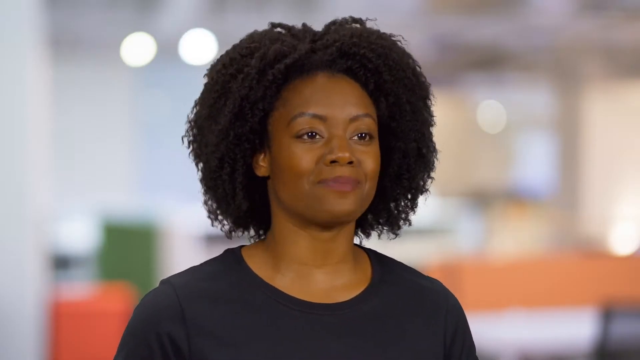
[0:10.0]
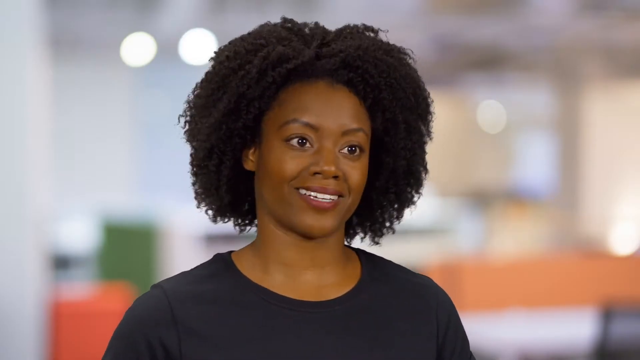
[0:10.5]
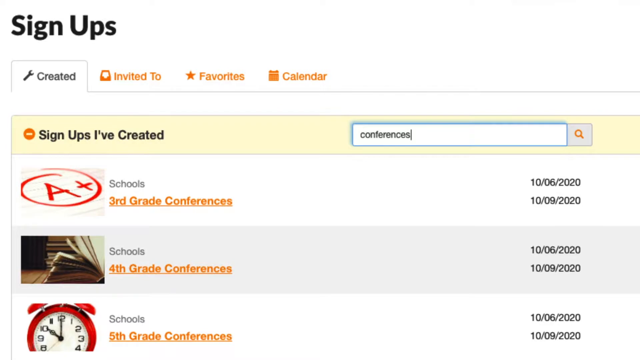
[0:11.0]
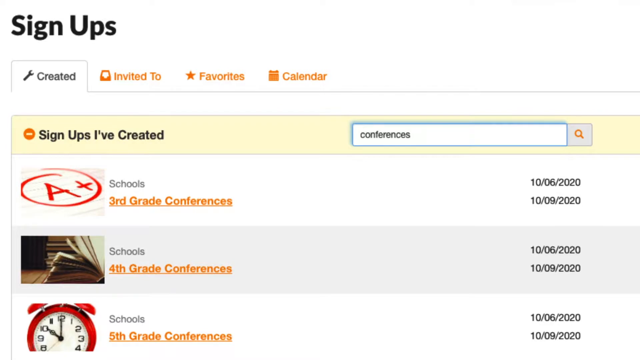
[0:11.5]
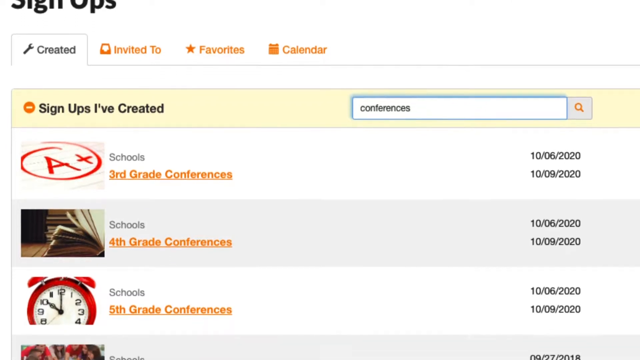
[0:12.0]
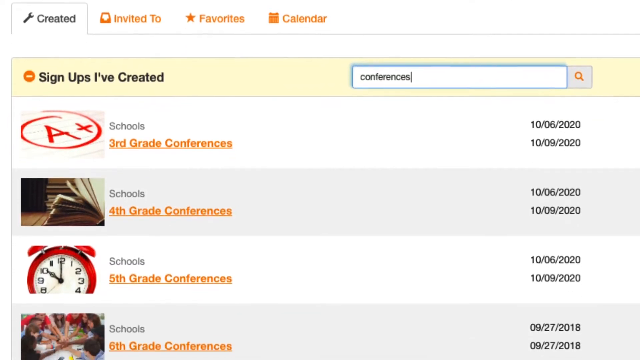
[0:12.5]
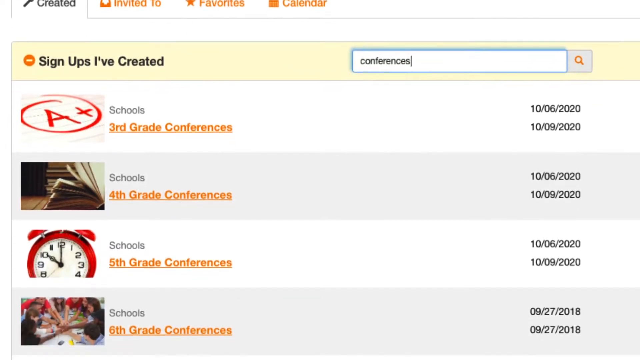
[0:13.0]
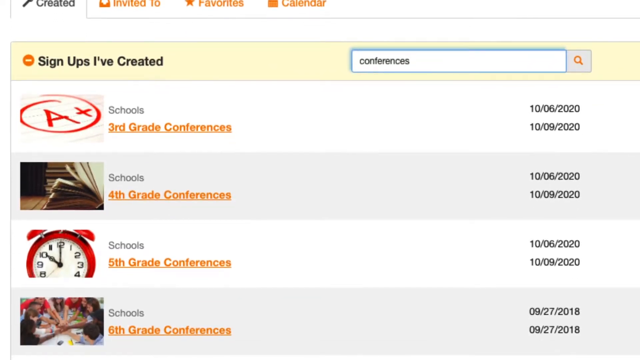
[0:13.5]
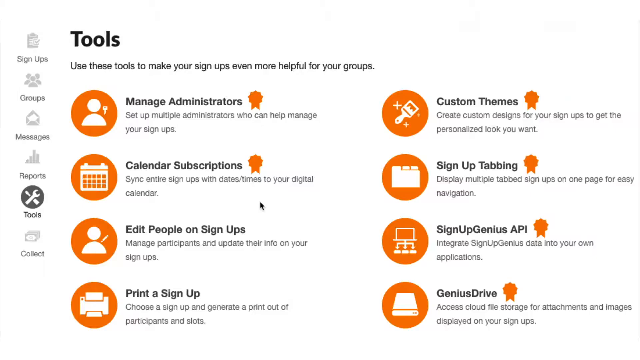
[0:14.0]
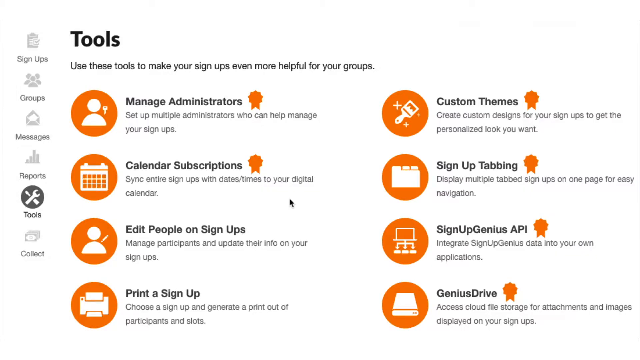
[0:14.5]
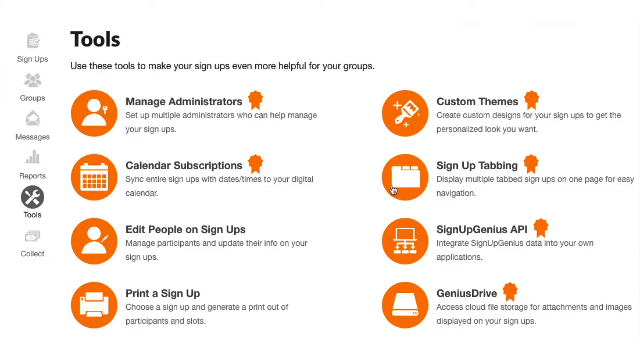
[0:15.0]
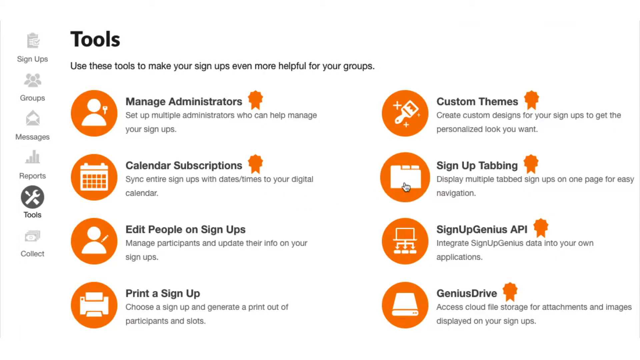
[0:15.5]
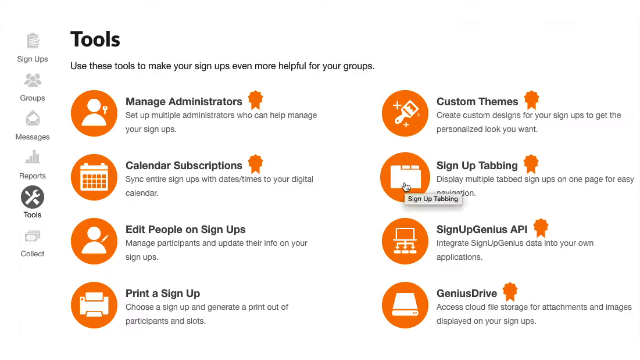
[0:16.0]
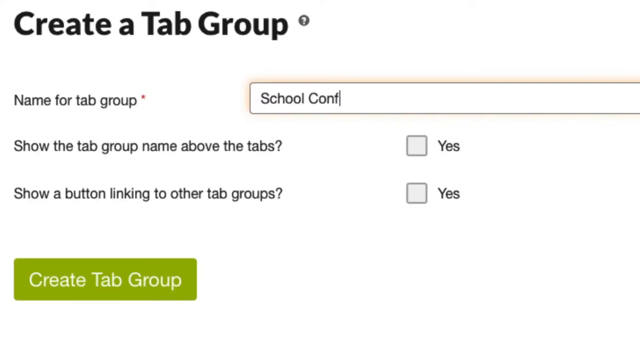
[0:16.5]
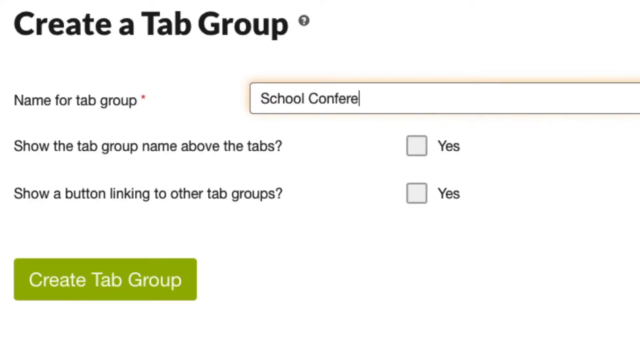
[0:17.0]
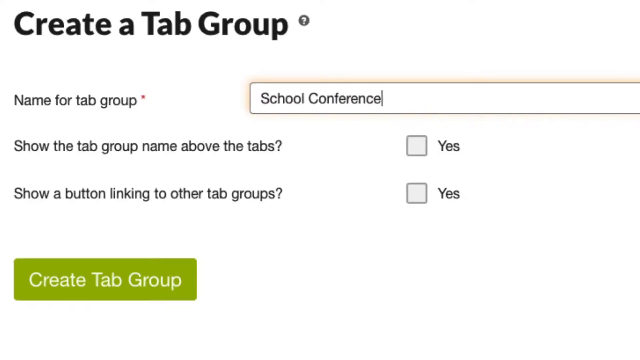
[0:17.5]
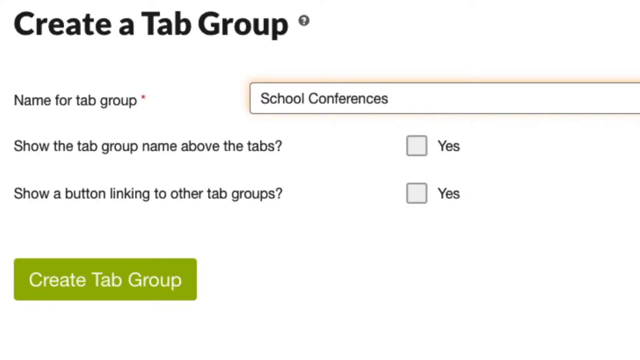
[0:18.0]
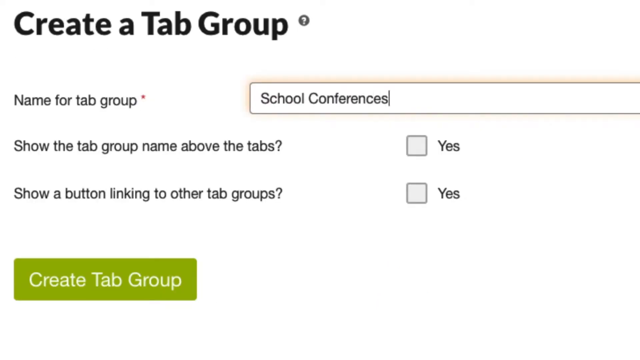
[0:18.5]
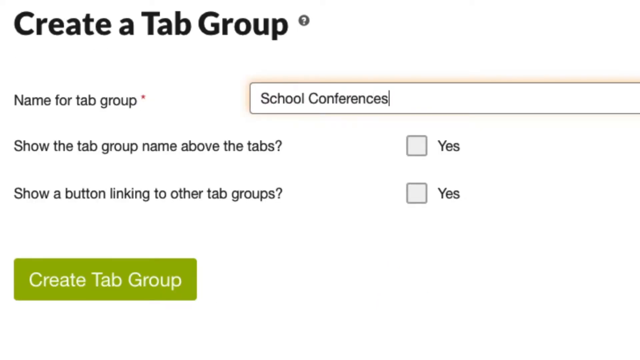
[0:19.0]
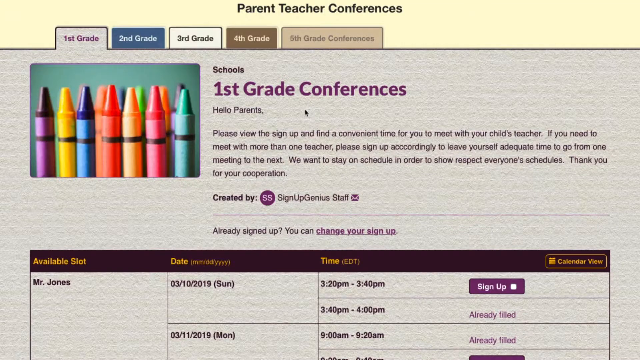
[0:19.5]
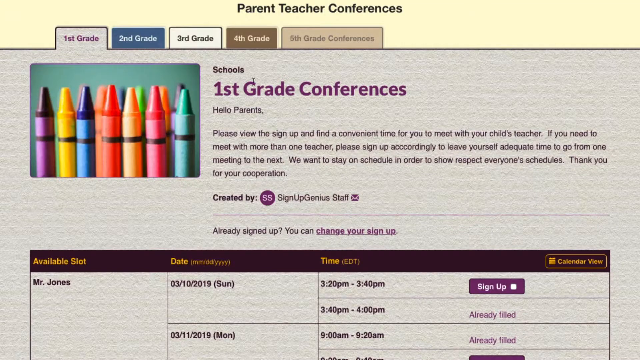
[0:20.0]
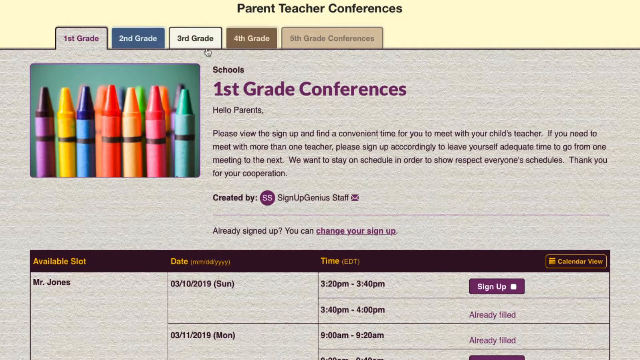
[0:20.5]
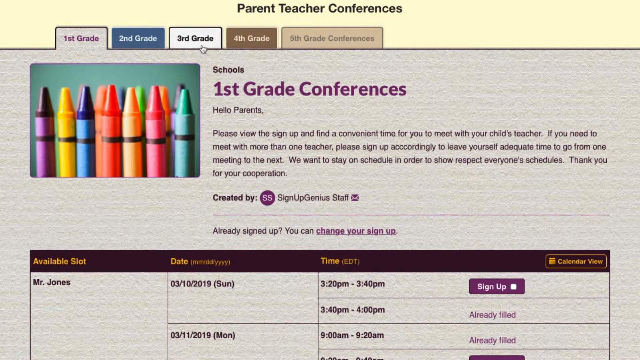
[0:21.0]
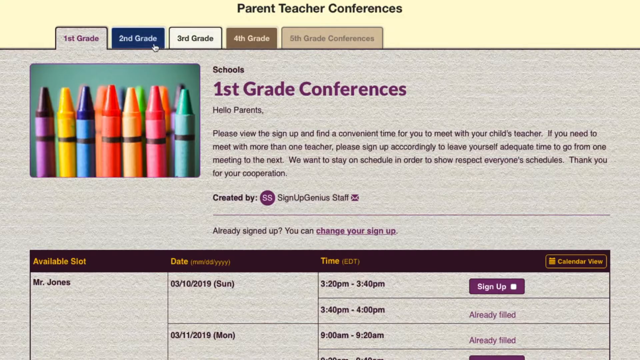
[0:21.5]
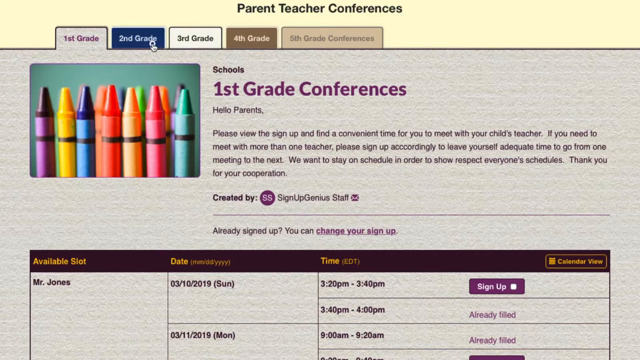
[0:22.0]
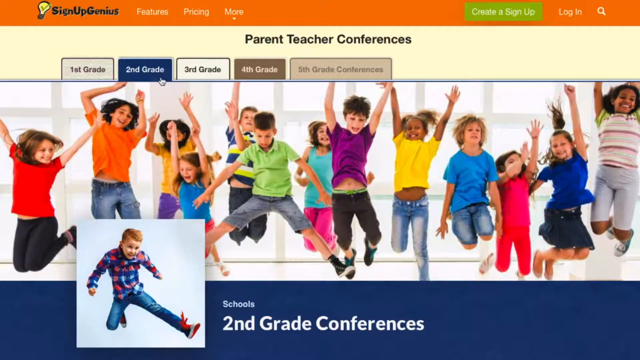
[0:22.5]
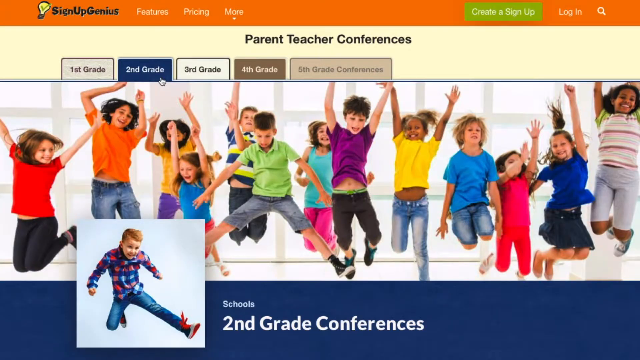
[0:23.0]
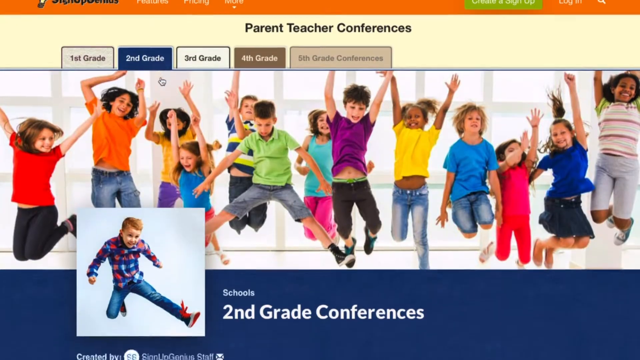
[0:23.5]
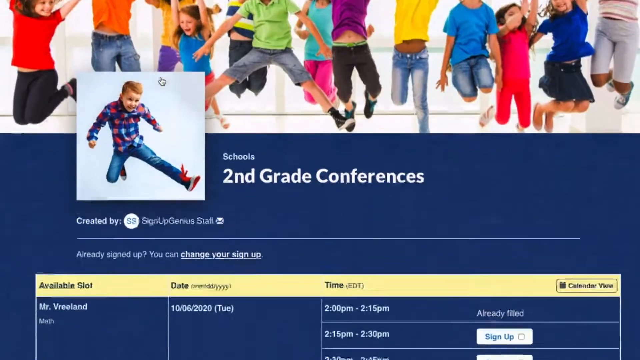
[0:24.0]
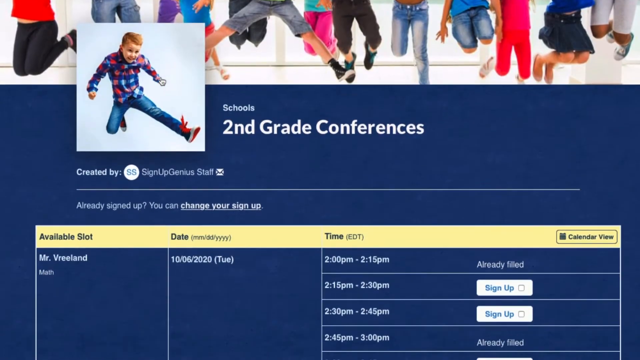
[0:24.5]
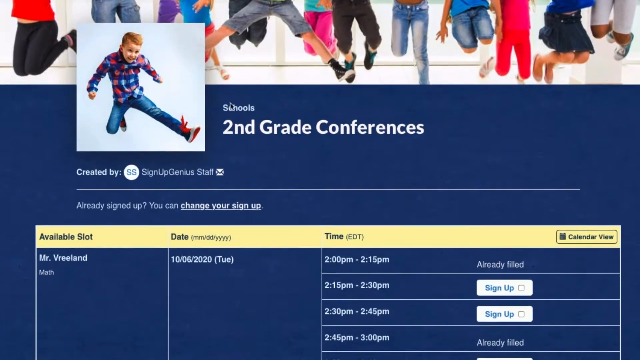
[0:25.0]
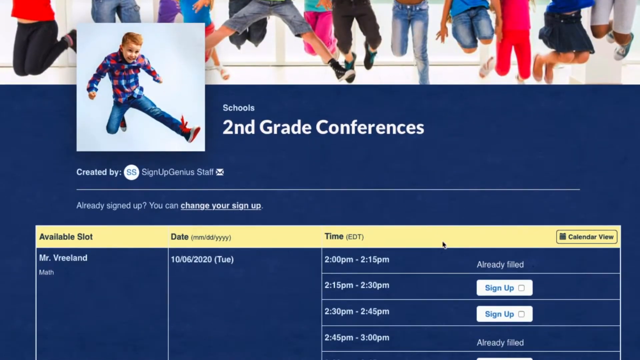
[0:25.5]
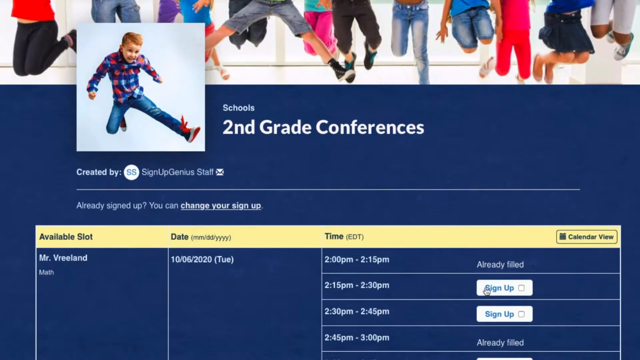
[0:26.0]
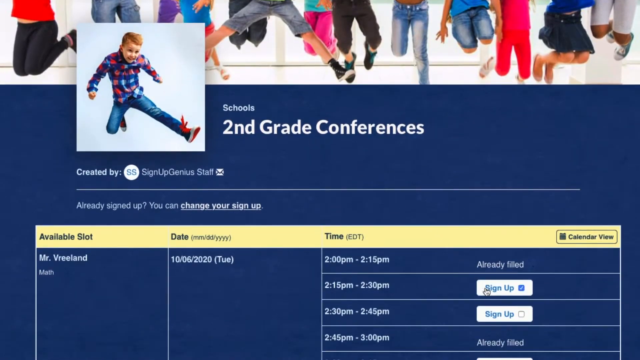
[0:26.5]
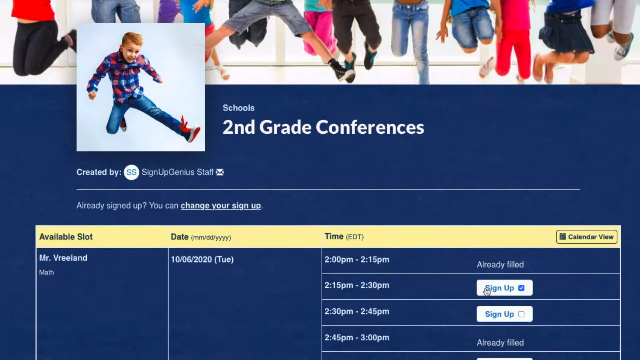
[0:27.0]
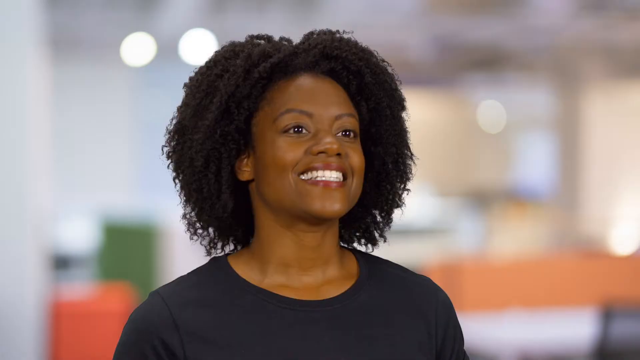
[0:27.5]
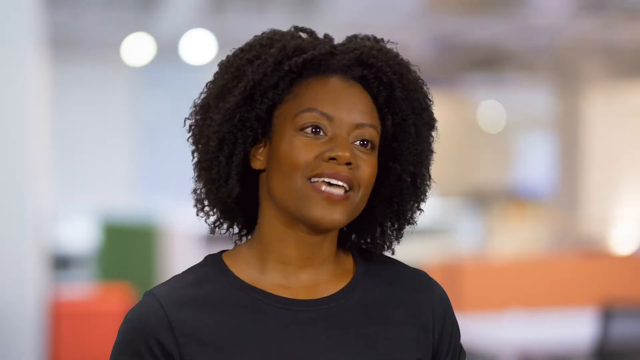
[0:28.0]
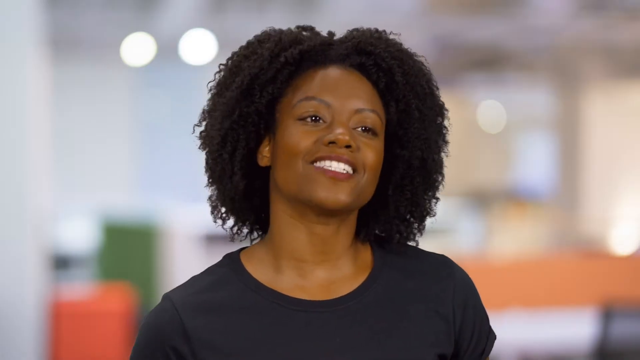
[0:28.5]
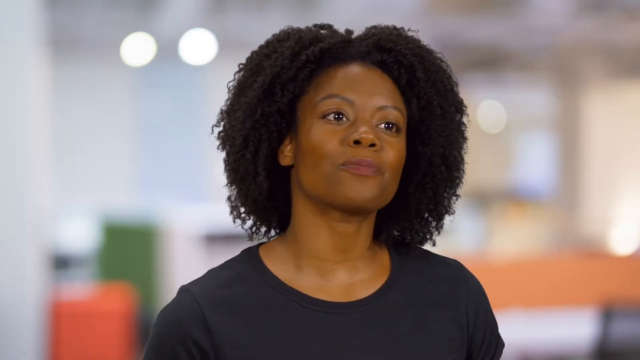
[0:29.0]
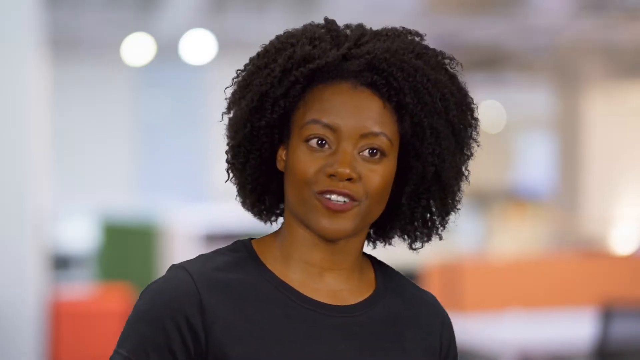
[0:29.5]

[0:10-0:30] A dark-skinned Black woman with curly black hair, in her mid to late 20s, is shown from the chest up. She wears a black t-shirt and has an intense look on her face as she talks to the camera, with an office-type setting blurred in the background behind her. After she says a few words, a transition shows a website sign-up page. At the top is a large black title, "signups", with four categories directly underneath: "created", "invited to", "favorites" and "calendar", each with a small icon to the left. In the next section is the title "signups I've created" with different listings that can be filtered. The camera scrolls down to show a few of the listings before the video transitions to a tools menu from a web application designed for managing group signups. The interface has a two-column layout against a white background, with four icons shown in each column and a master's category list on the far left side.